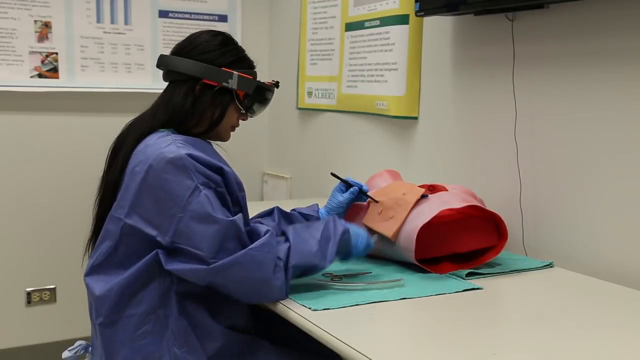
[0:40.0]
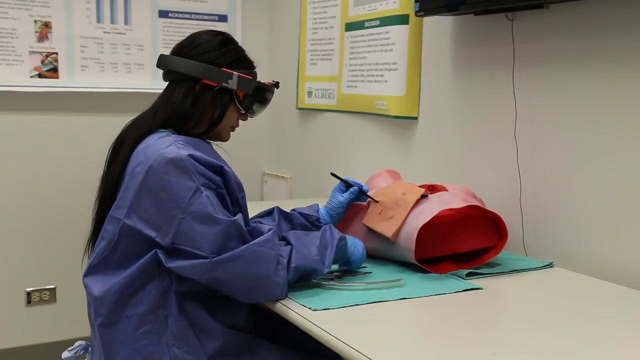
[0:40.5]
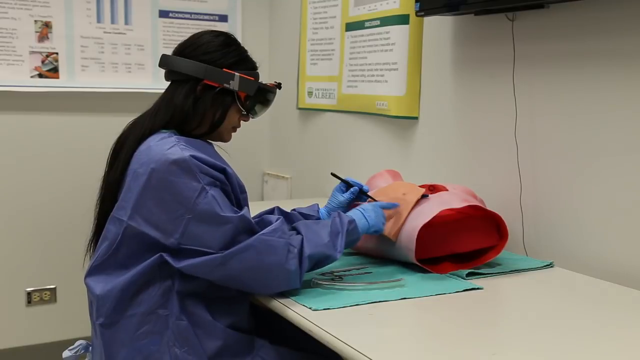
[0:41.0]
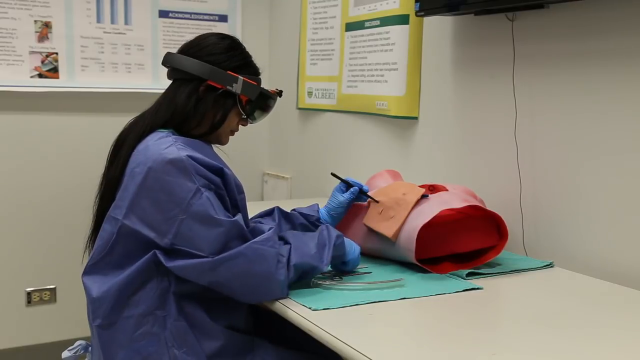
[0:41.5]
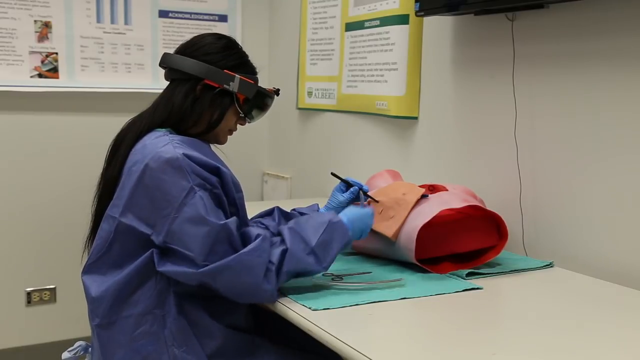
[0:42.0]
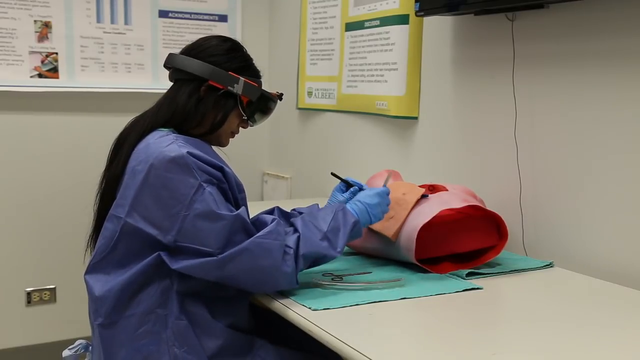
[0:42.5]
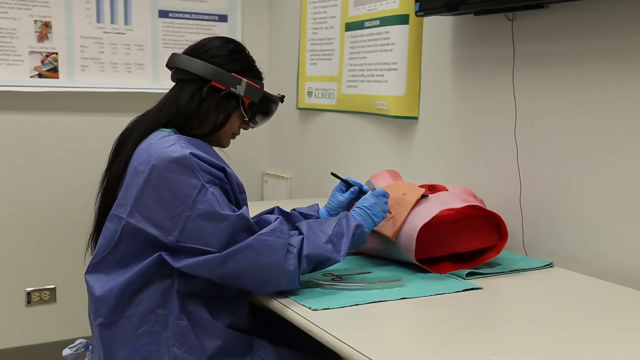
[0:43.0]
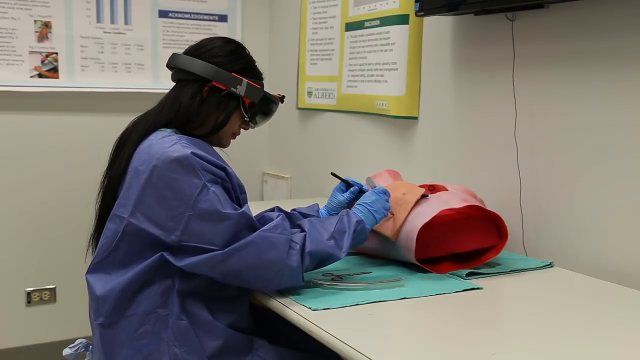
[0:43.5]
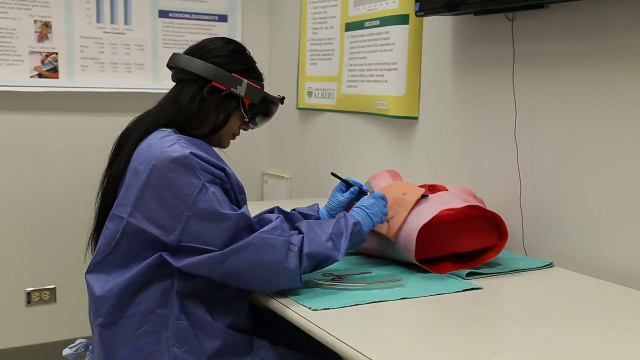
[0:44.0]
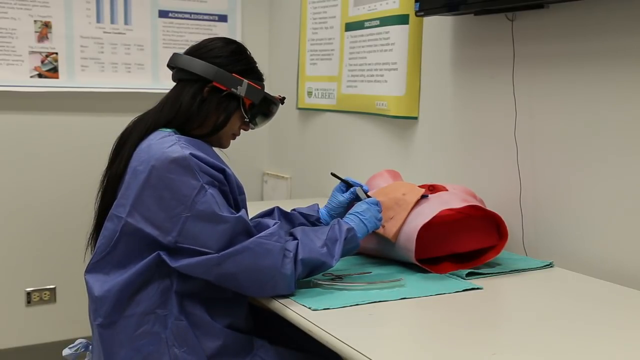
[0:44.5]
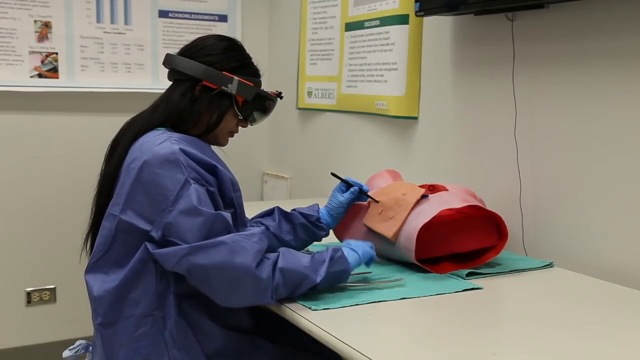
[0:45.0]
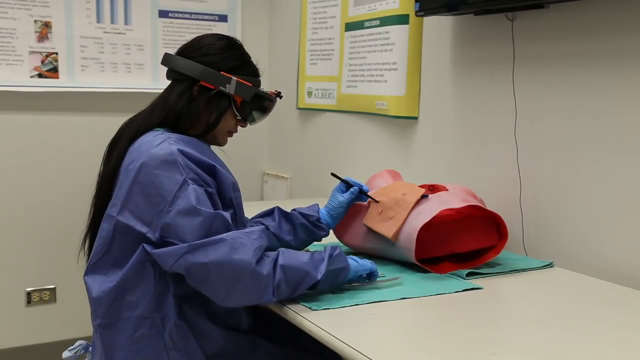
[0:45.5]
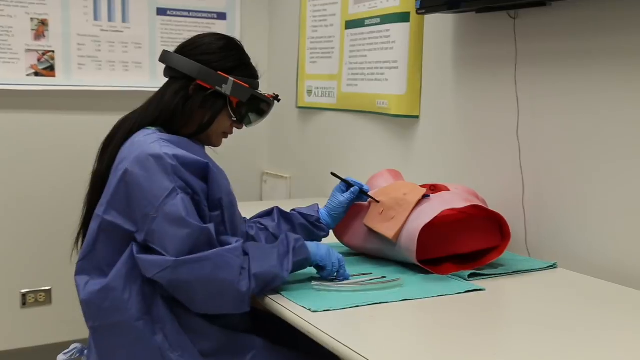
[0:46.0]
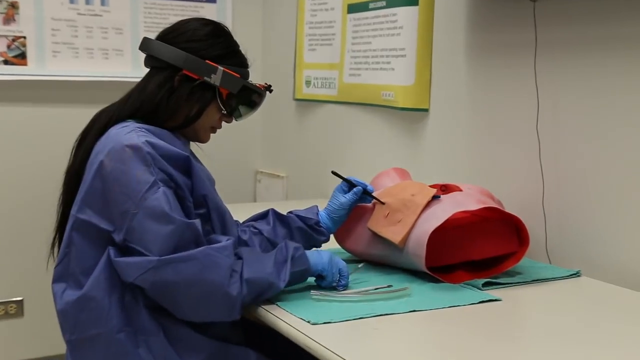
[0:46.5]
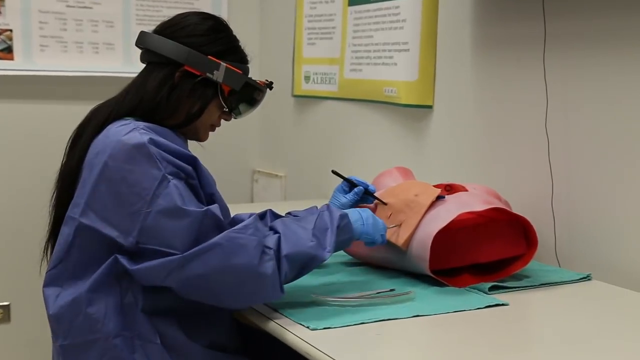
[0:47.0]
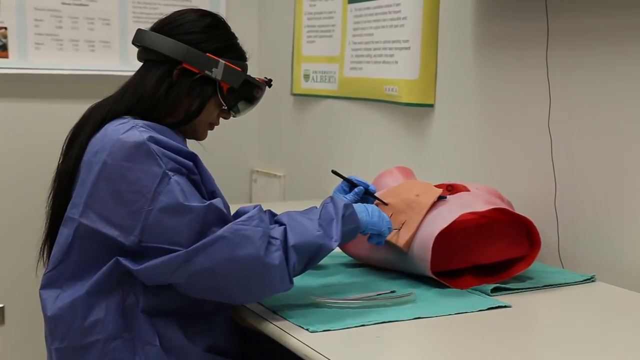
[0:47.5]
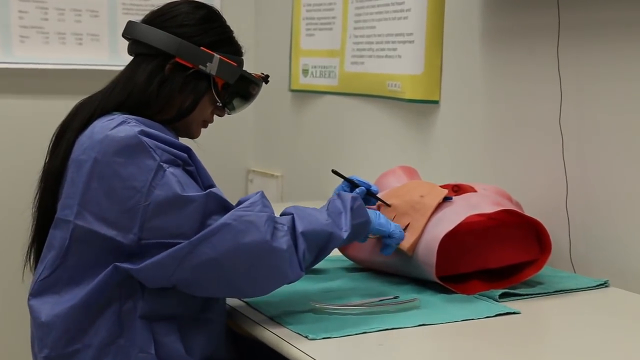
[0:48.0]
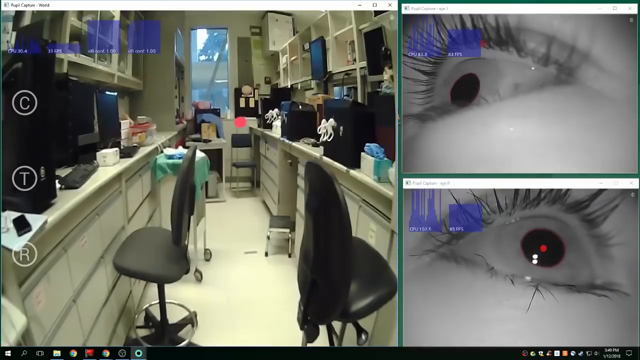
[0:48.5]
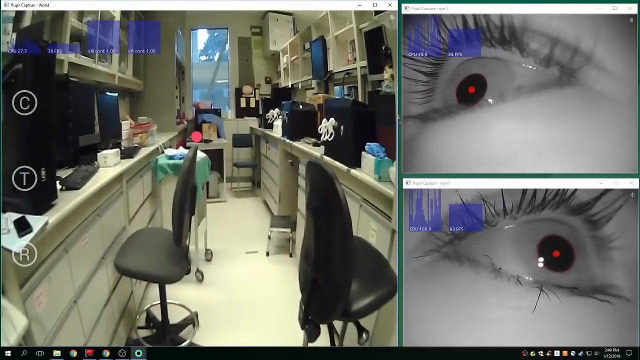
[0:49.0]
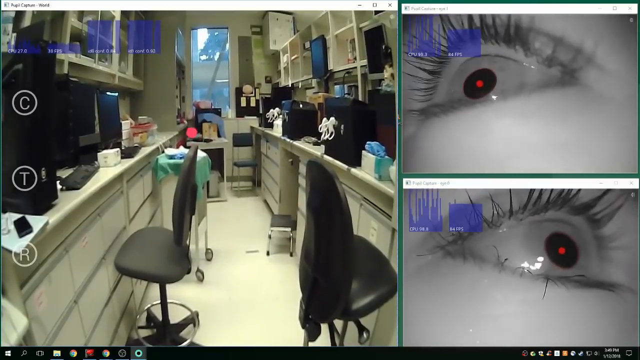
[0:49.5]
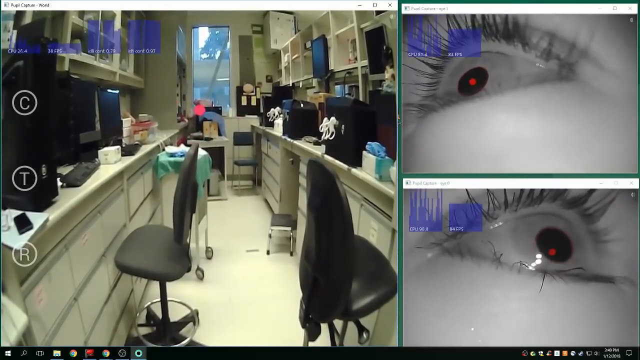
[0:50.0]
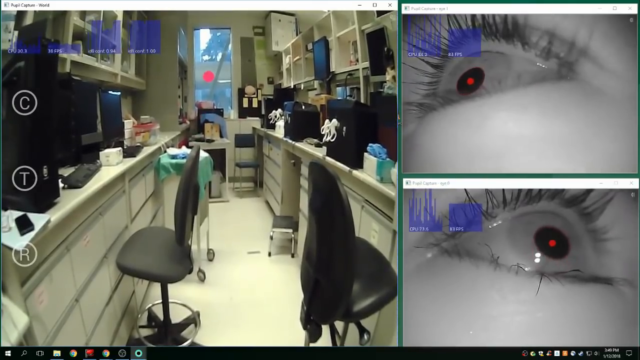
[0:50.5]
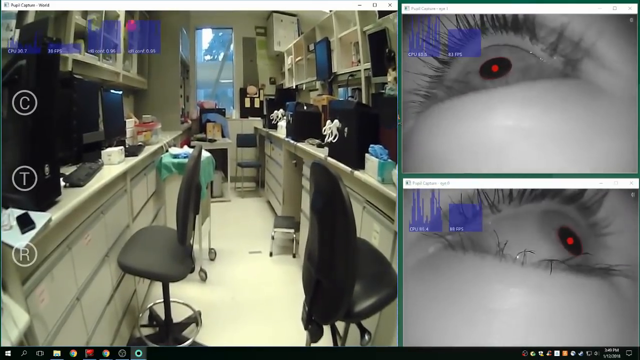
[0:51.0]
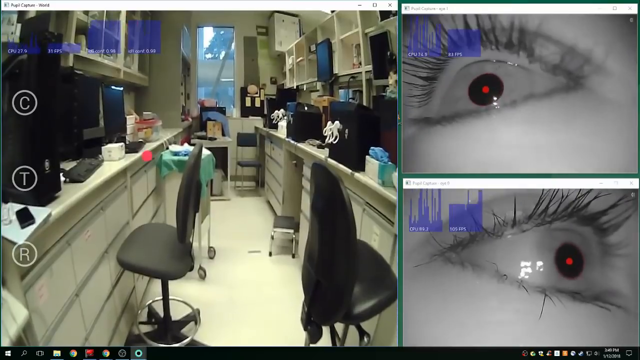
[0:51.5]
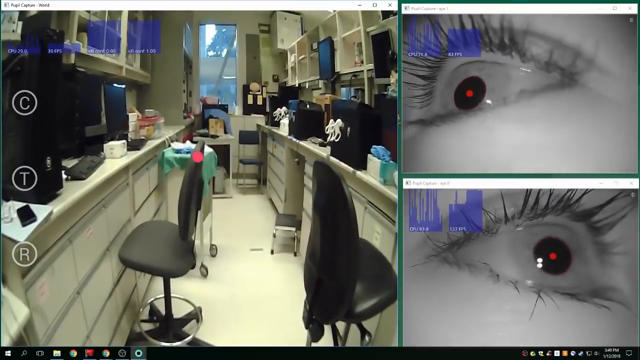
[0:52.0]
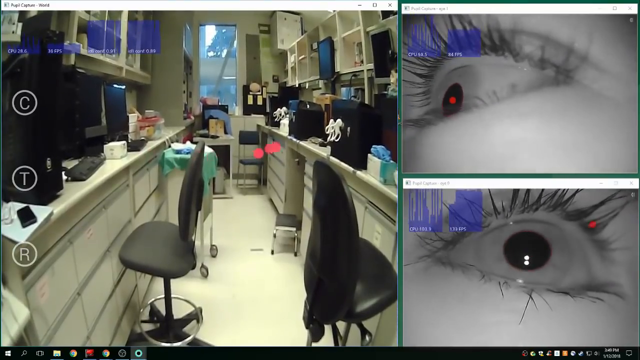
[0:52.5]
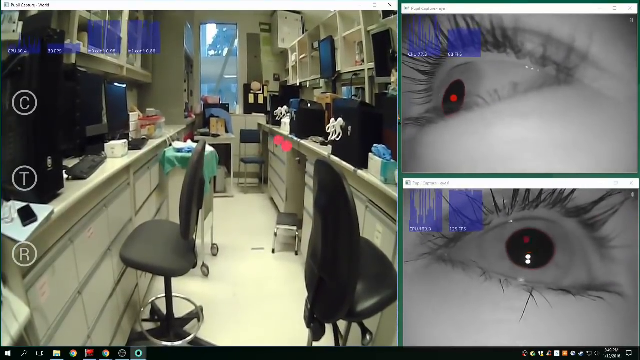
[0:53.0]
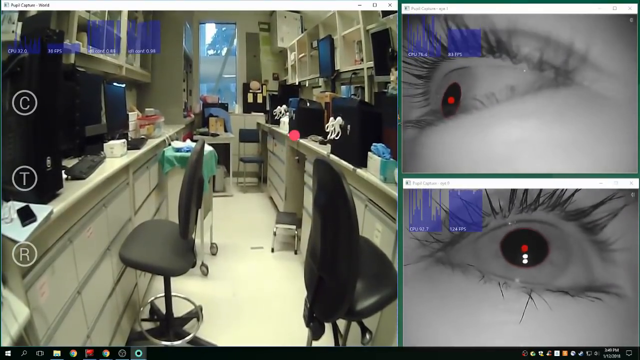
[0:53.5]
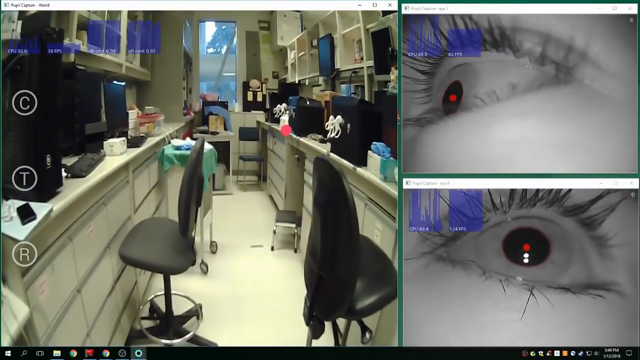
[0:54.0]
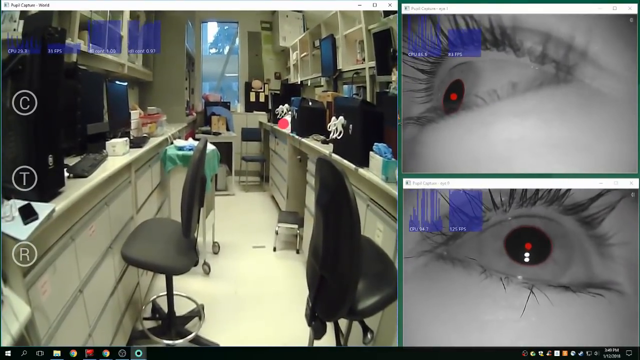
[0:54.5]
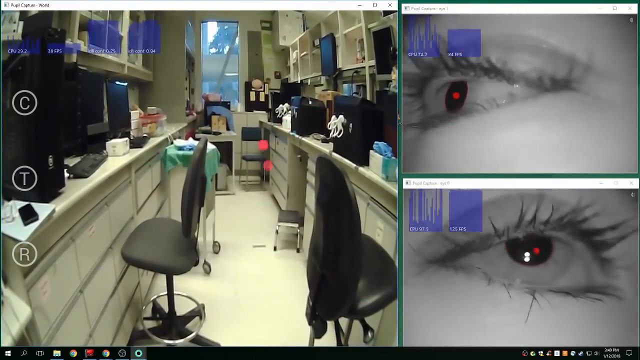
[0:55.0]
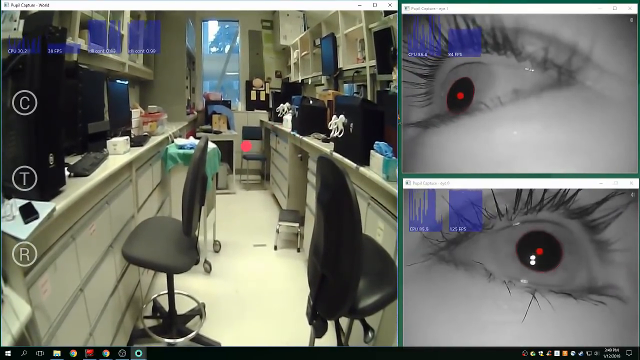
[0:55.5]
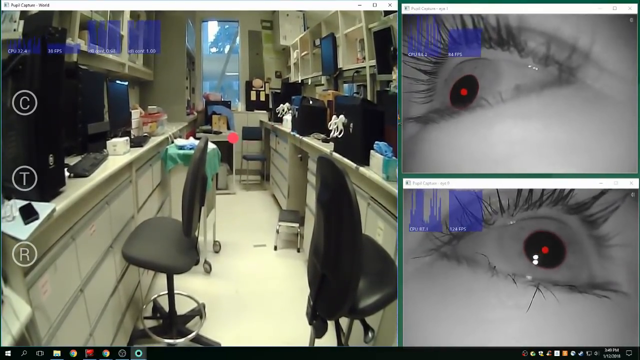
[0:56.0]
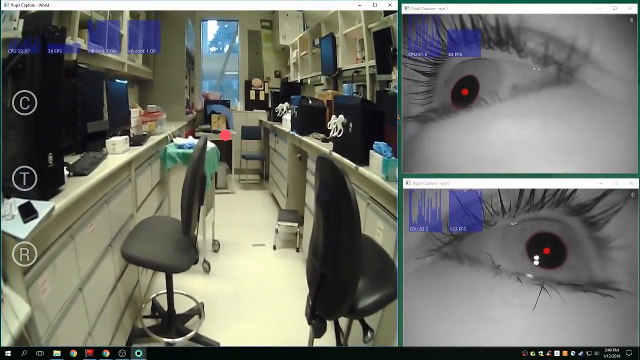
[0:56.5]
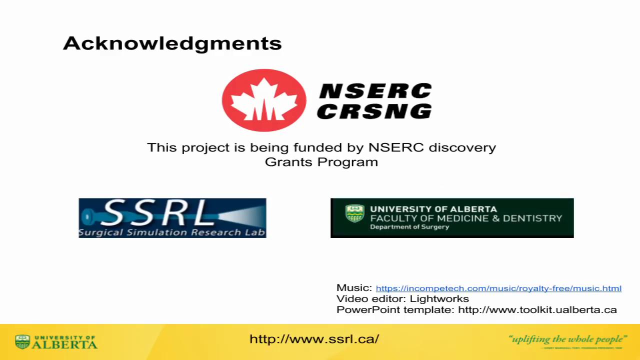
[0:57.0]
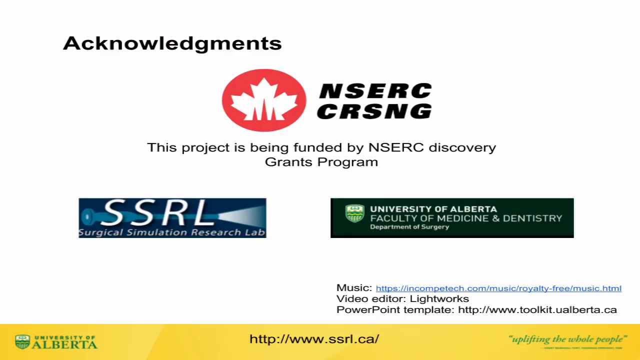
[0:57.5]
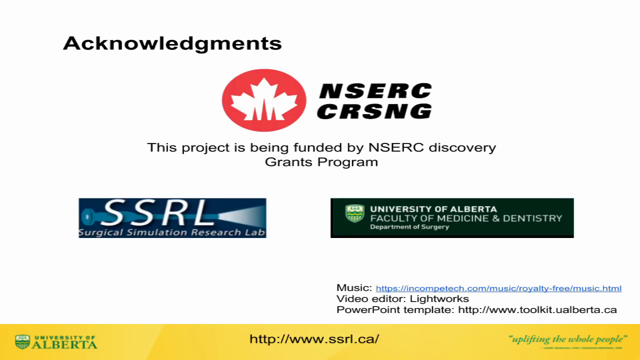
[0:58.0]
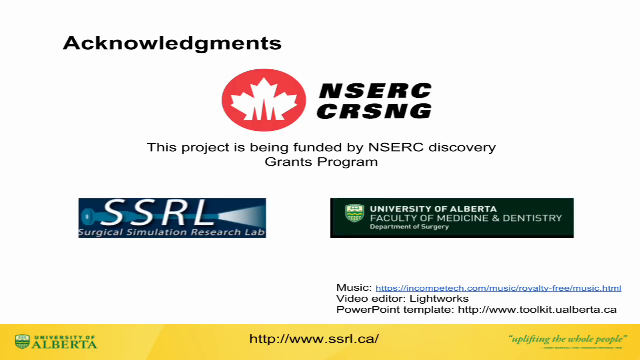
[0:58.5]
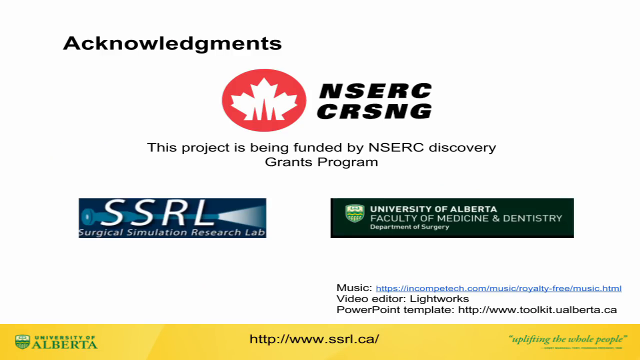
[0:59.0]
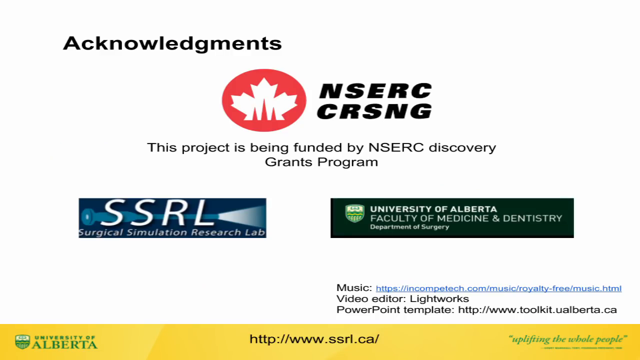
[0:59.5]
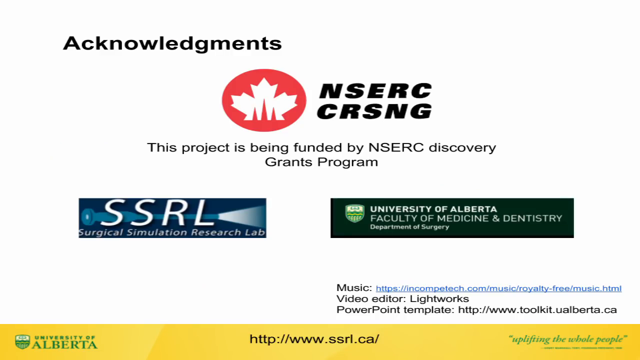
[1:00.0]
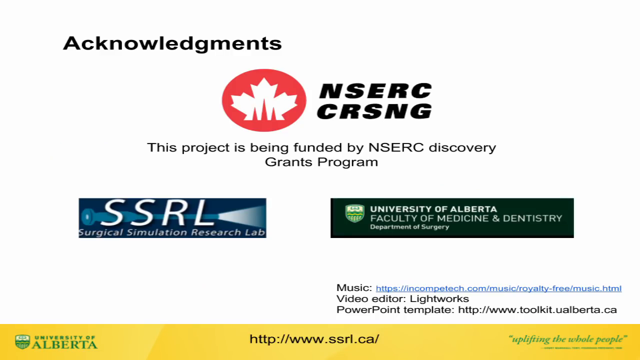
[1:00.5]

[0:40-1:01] The medical student, still wearing the simulation glasses, continues the simulated surgery on the upper torso of the synthetic cadaver on the table in front of her. She holds medical equipment in her left hand, applying it to the cadaver. She picks up medical equipment in her right hand, places it back down on the table, points her fingers at the cadaver, then picks the equipment back up and uses it on the cadaver again. She appears to use it to make a simulated cut, then places the equipment, a scalpel, back down on the table in front of her. She picks up a different piece of medical equipment, applies it to the cadaver's body where she is doing the simulated surgery and inserts it into the body. The scene changes to a split view: what appears to be a lab room on the left side, a close-up of an eye at the top right and a close-up of an eye at the bottom right. The top eye has long eyelashes, appears to be looking up, and has a small red light shining in its middle. The bottom eye, looking toward the right side of the screen, also has long lashes and a small red light shining on its middle. The eyes start to move: the top eye moves to the left, and the bottom eye moves toward the right and comes back to a neutral position. Finally, the acknowledgments appear, showing that the project is funded by NSERC Discovery Grants Program.